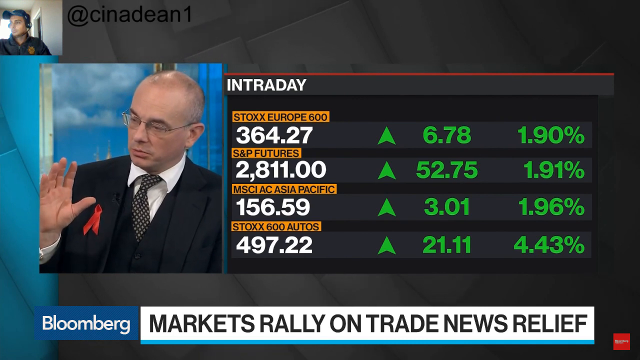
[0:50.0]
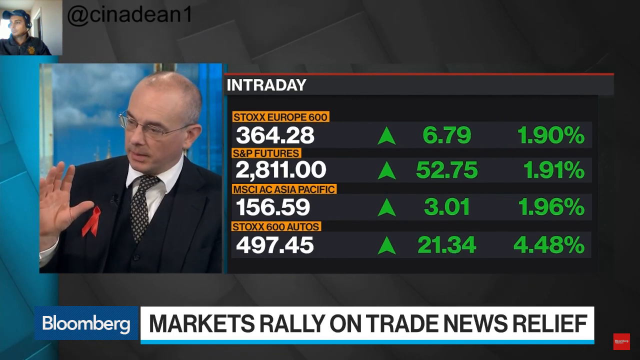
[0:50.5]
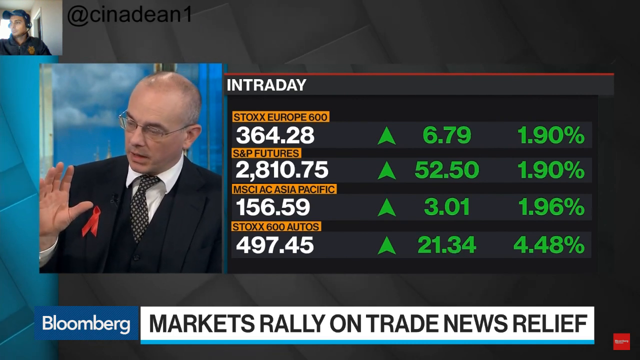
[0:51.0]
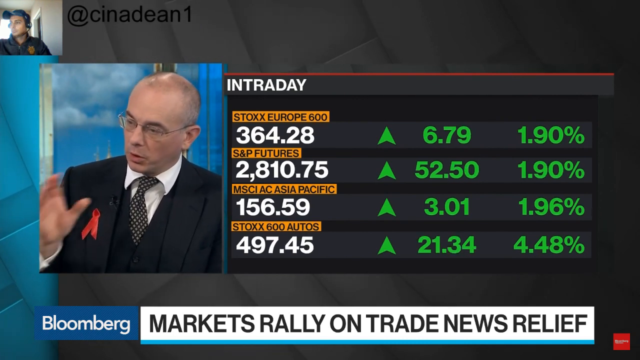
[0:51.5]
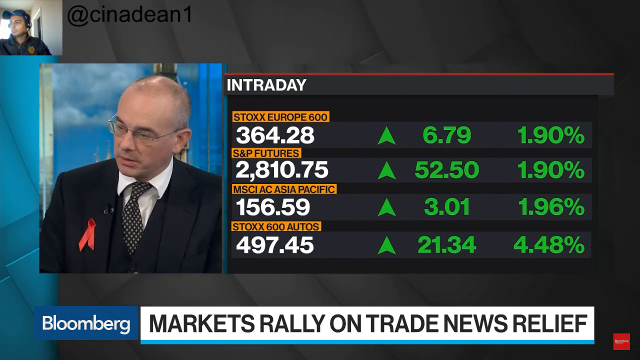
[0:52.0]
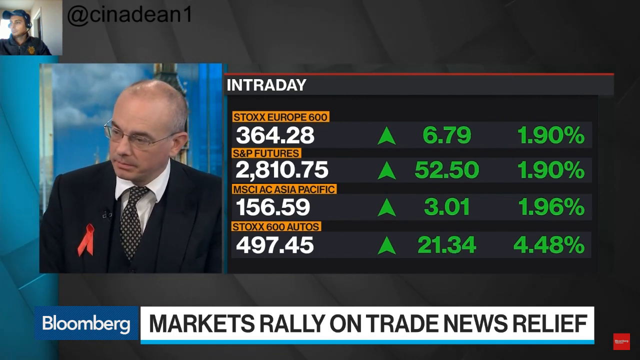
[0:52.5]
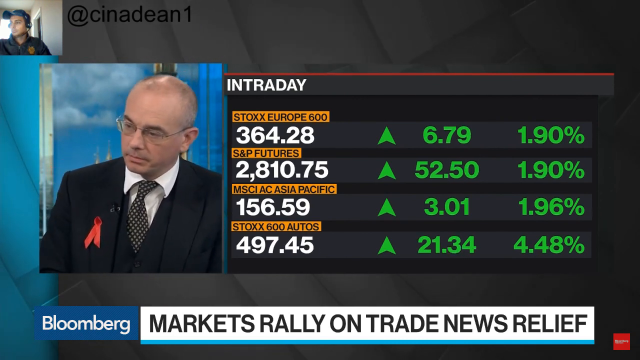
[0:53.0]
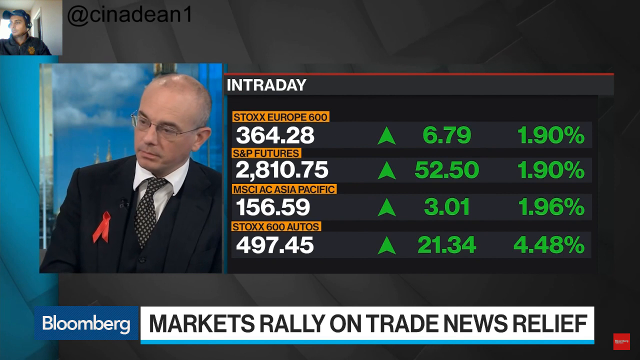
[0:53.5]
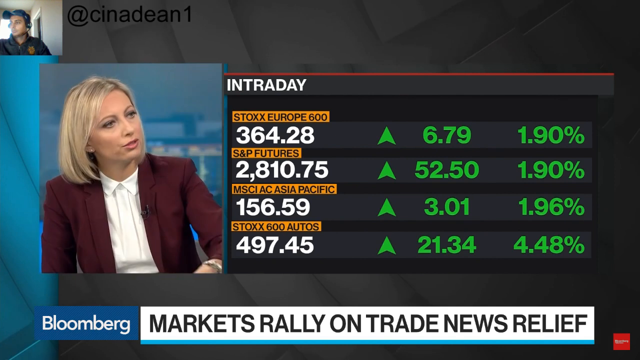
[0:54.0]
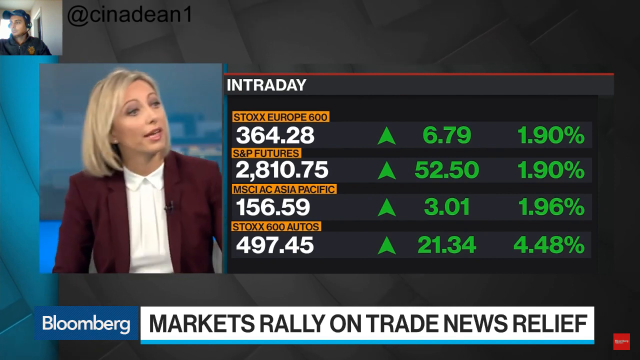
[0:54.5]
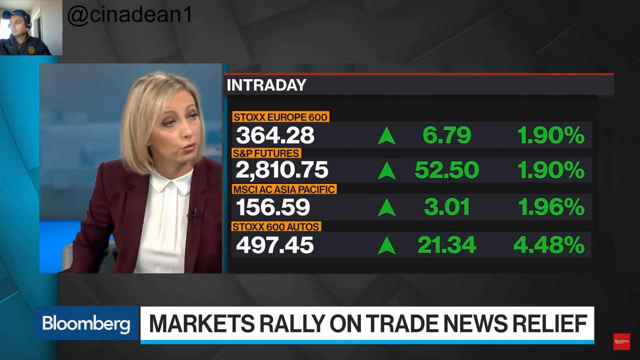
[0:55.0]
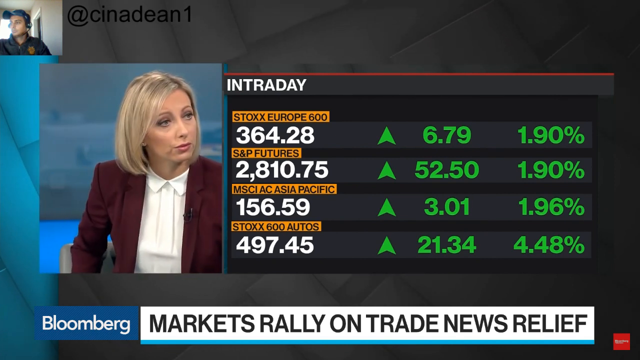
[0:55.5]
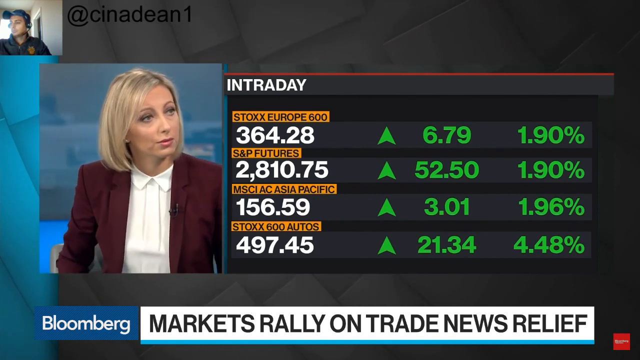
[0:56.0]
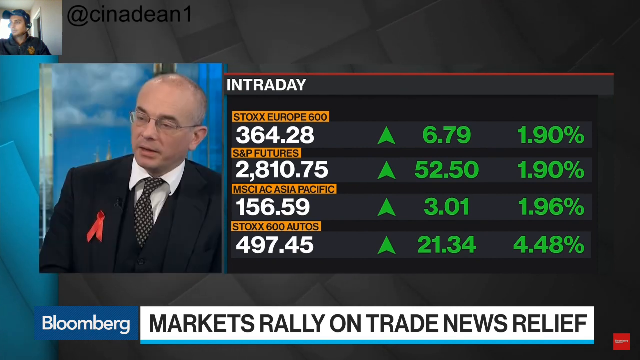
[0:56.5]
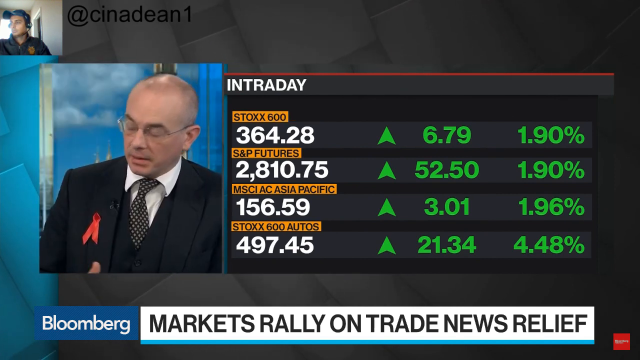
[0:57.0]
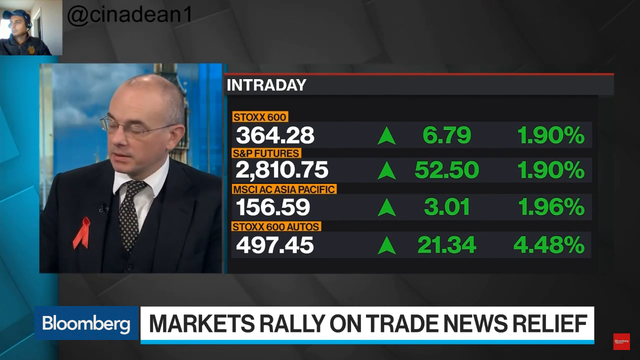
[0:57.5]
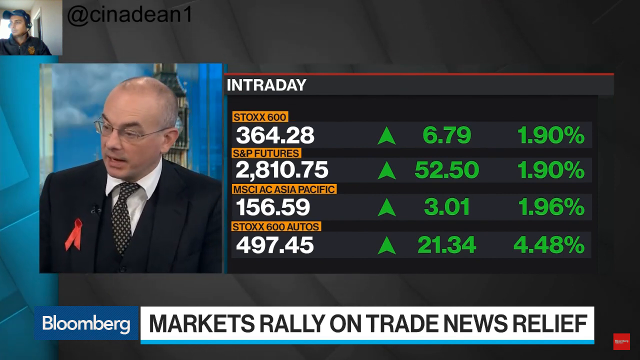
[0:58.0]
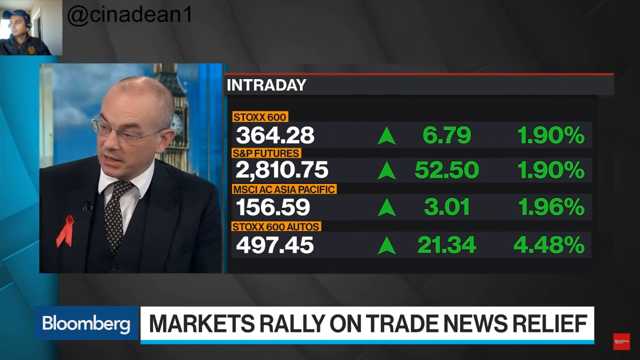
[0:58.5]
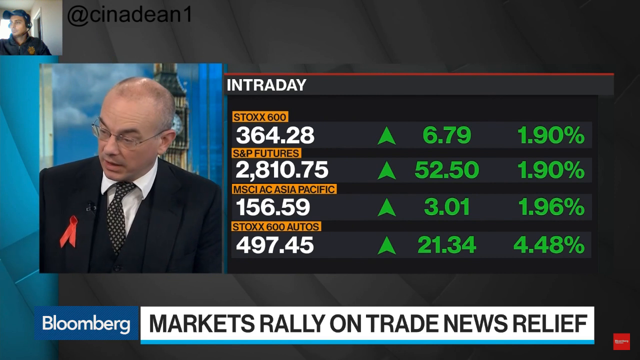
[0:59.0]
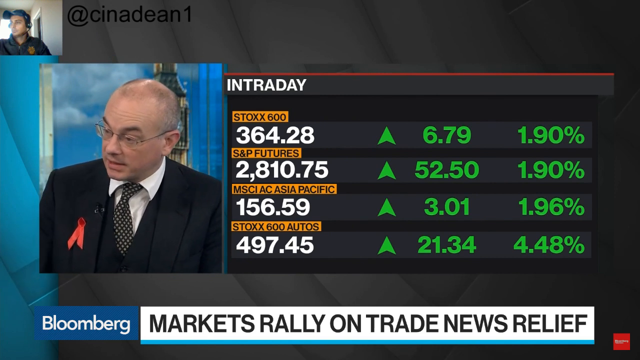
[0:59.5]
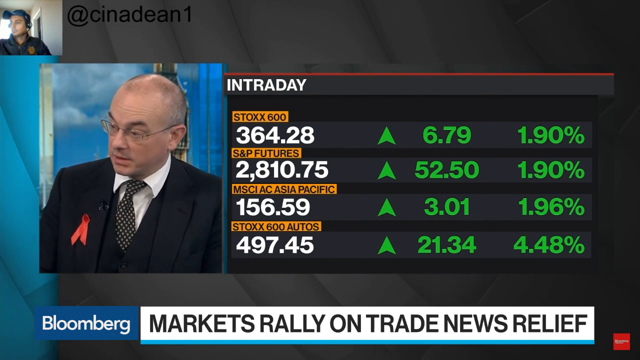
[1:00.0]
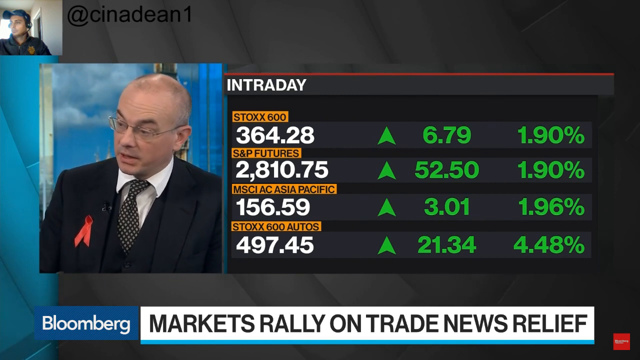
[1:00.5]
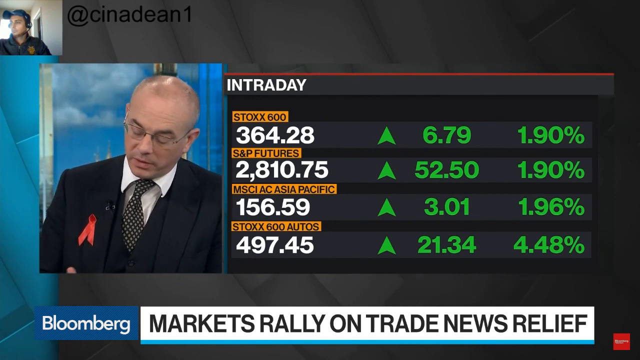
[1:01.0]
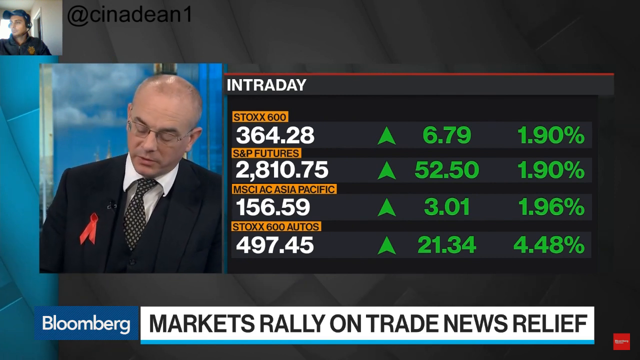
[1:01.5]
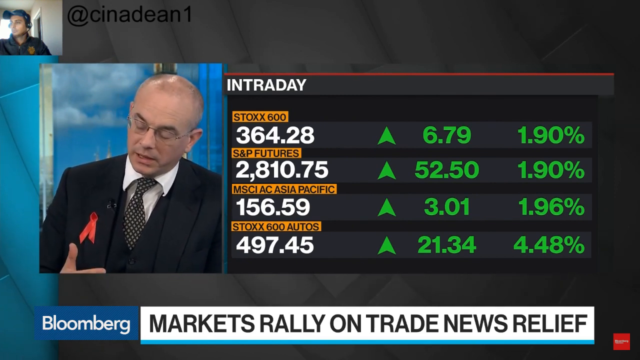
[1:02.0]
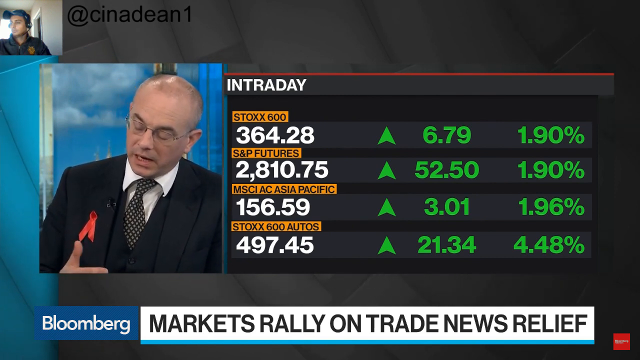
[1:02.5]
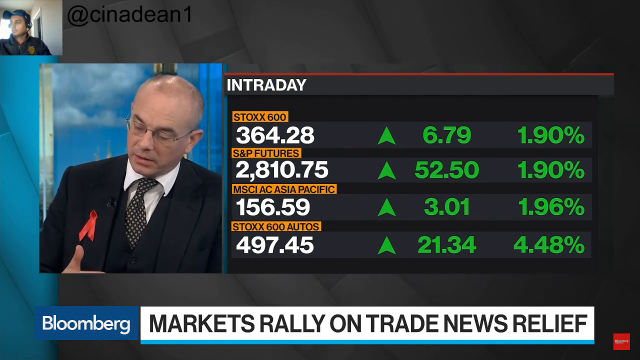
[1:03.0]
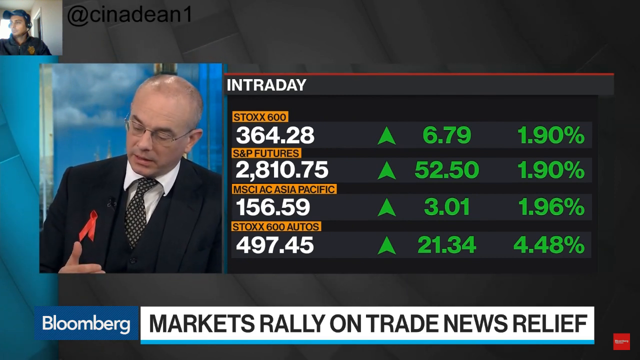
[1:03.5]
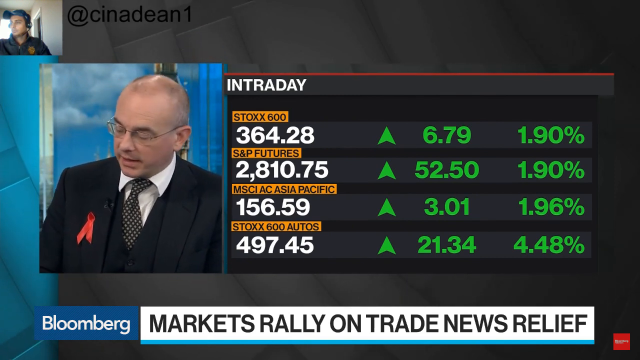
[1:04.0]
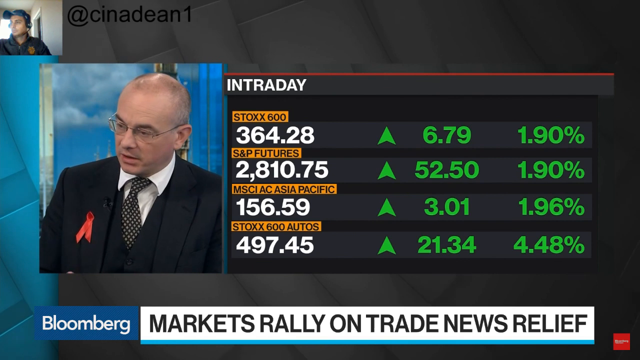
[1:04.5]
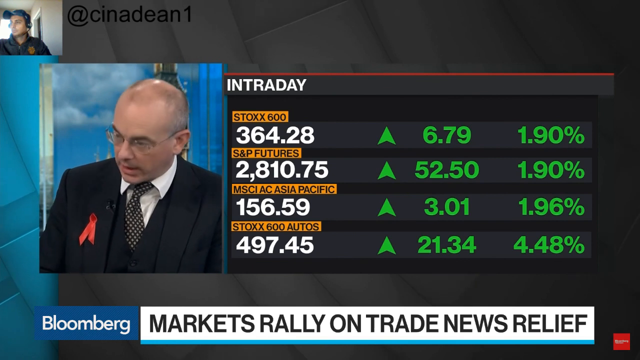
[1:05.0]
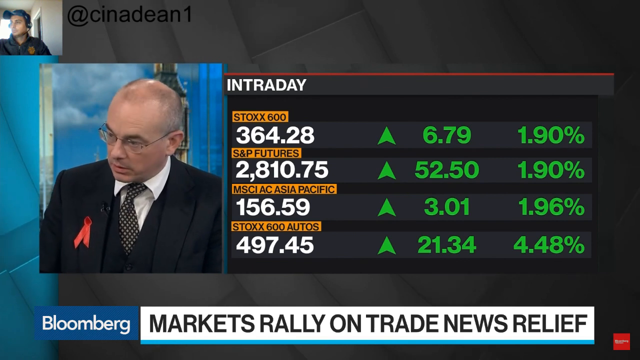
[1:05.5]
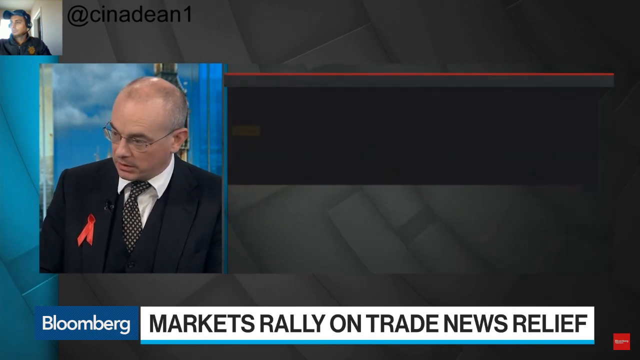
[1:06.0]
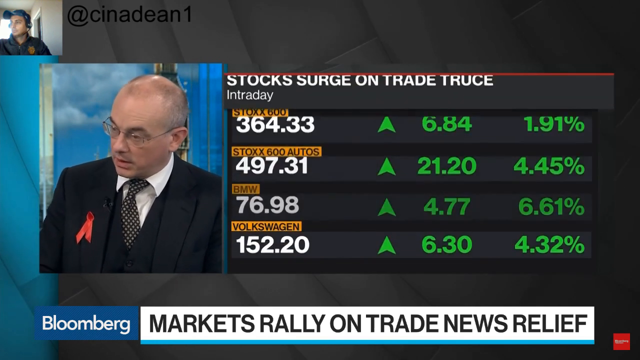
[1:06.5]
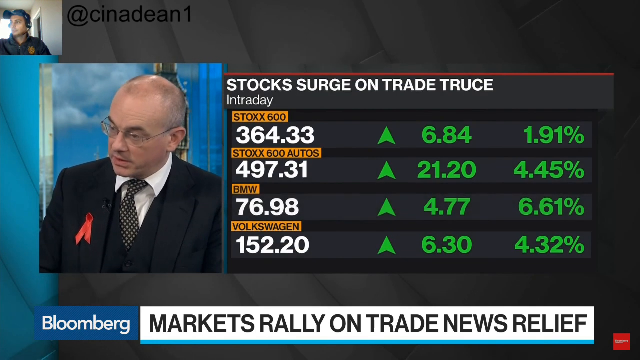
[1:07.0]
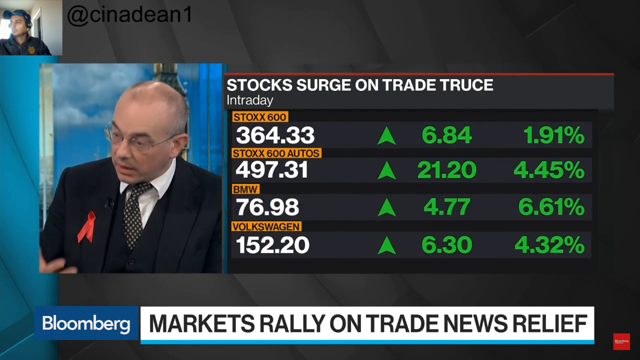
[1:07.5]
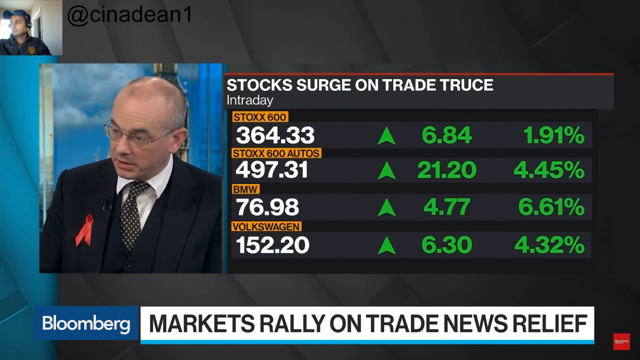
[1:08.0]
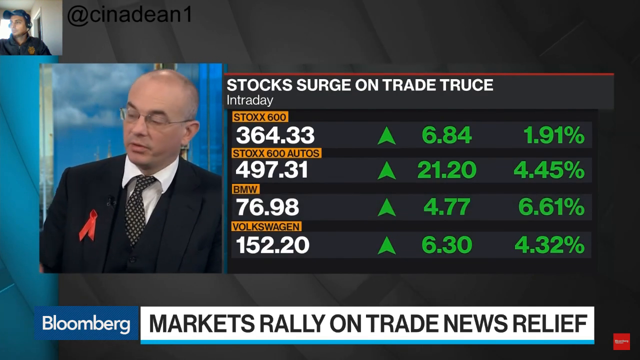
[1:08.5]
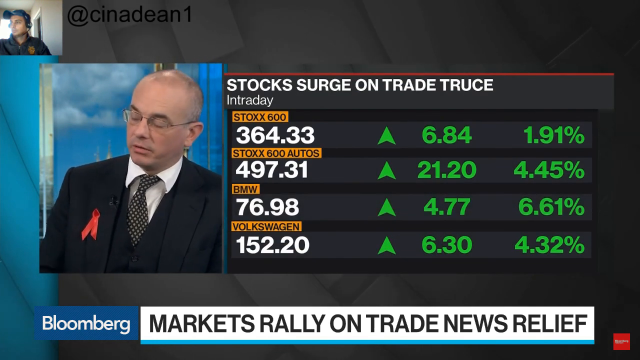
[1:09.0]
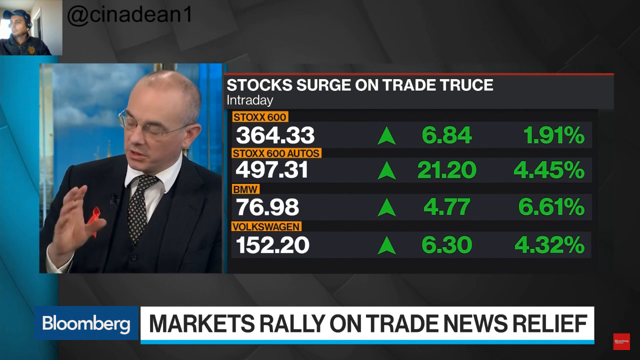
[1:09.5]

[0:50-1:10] In the top left corner is a man in a video feed, wearing a baseball cap and a dark-colored jacket, with the username "BINADEAN1" on a kind of black background. On the left, within a box, is a close-up of Paul Donovan in a black suit with a red ribbon on the right lapel. To his right is an intraday graphic listing stock indexes including Stocks Europe 600, S&P Futures, an Asia Pacific stocks entry and Stocks 600 Autos, all up in points and percentage. The bottom reads "markets rally on trade news relief" with the Bloomberg logo to the left. The view cuts to the woman, maybe the news anchor, as she asks a question, then goes right back to Donovan with the same graphic. The graphic then moves down to show a couple more entries, BMW and Volkswagen, also up.